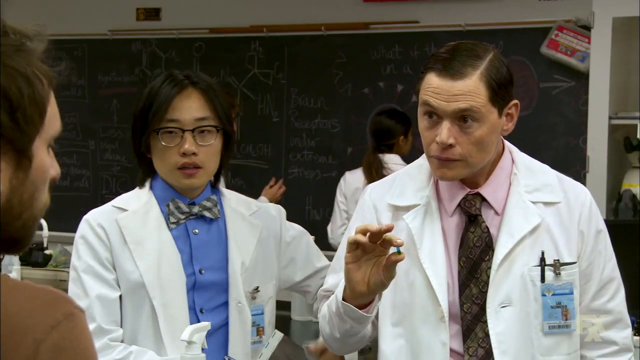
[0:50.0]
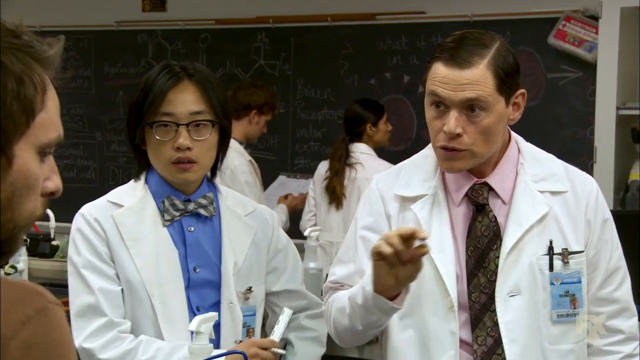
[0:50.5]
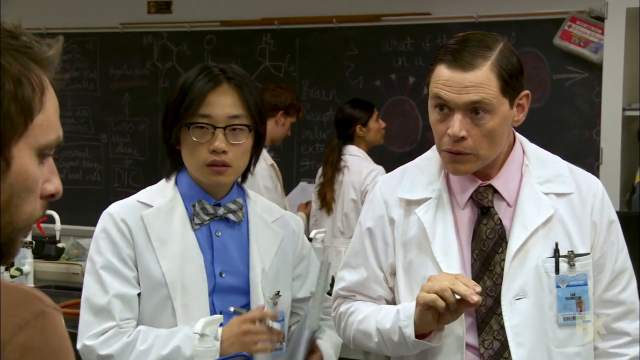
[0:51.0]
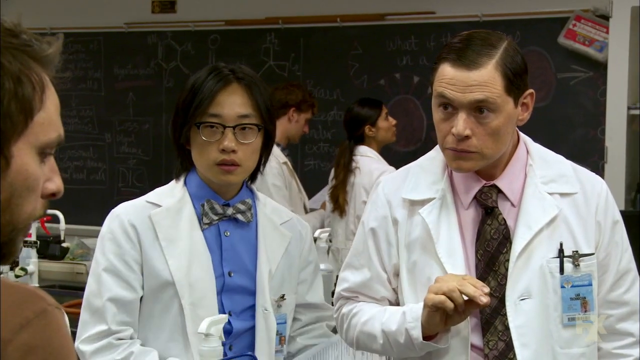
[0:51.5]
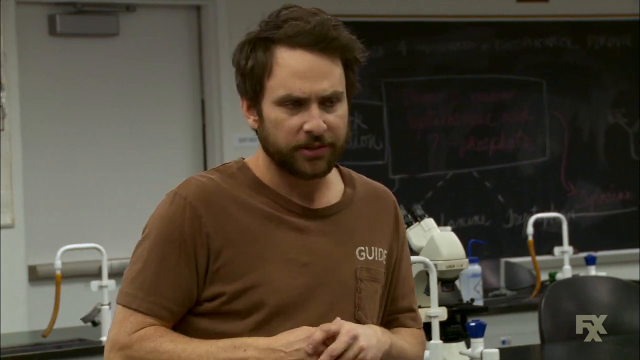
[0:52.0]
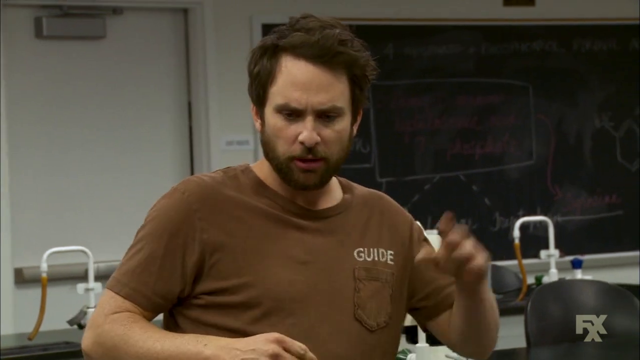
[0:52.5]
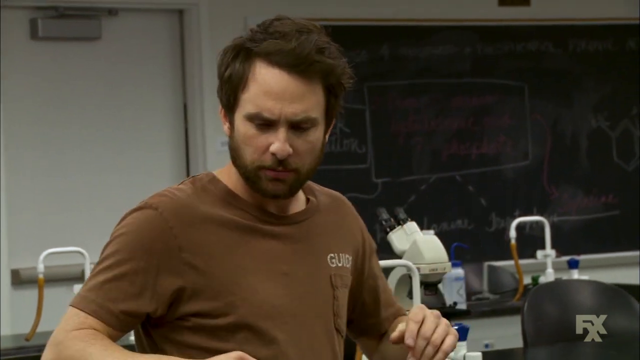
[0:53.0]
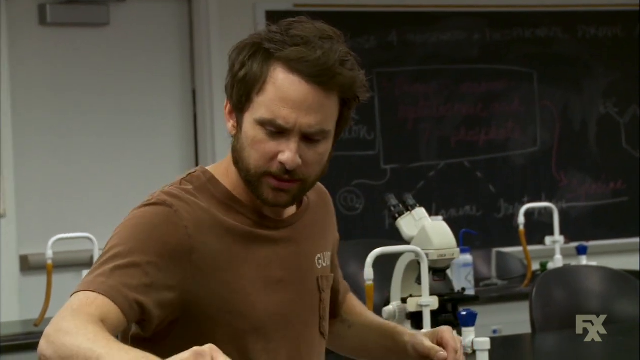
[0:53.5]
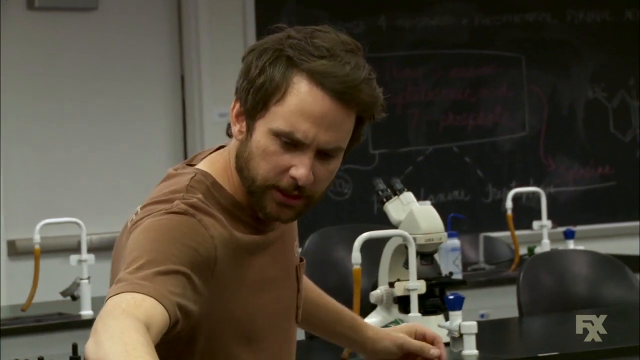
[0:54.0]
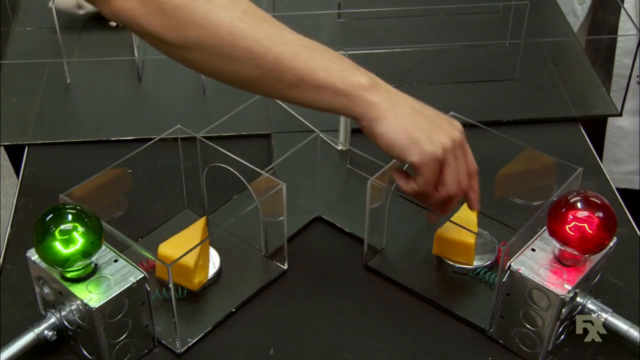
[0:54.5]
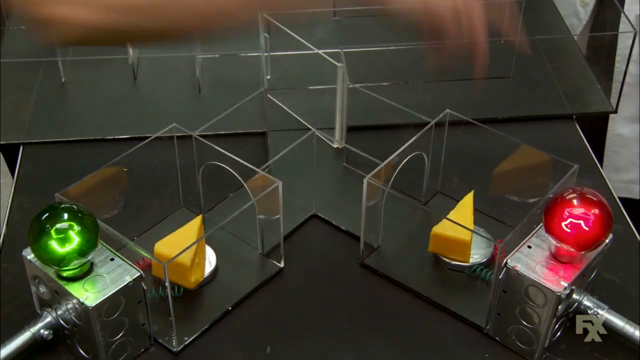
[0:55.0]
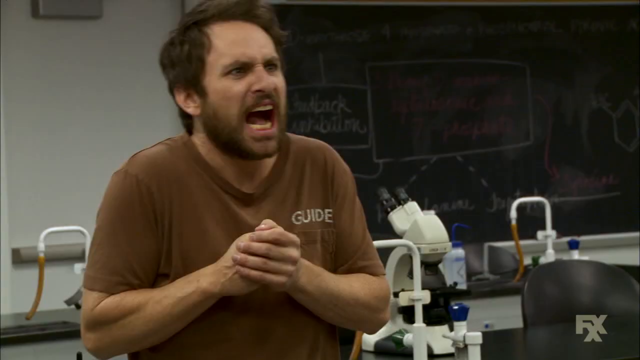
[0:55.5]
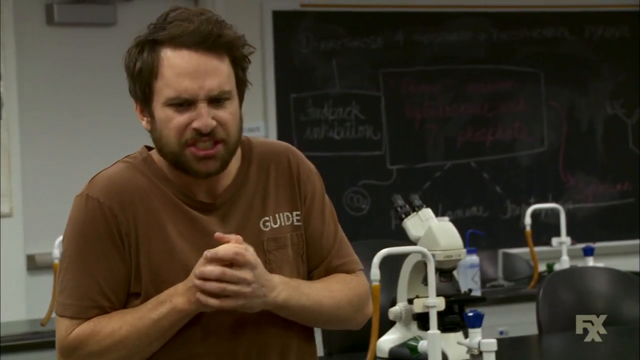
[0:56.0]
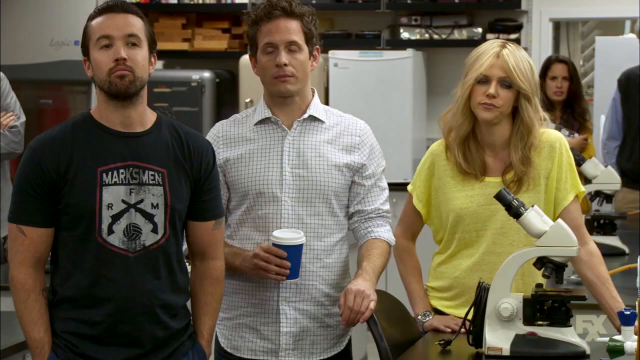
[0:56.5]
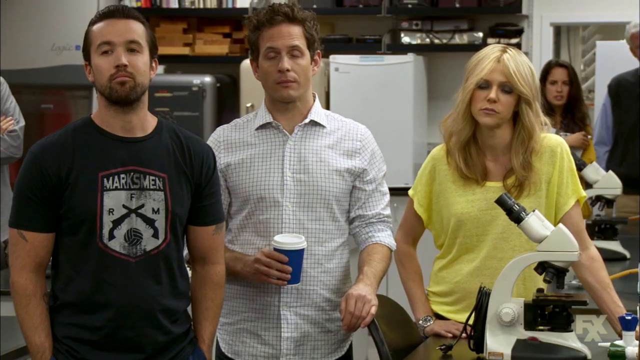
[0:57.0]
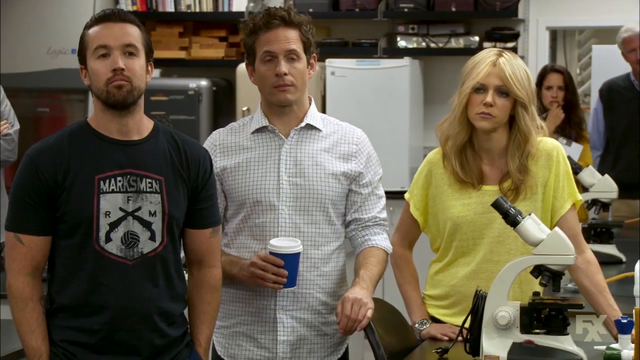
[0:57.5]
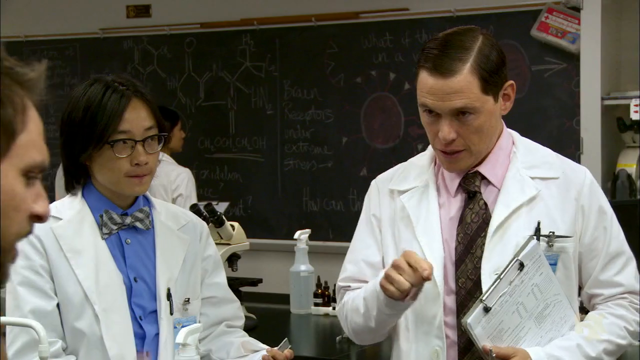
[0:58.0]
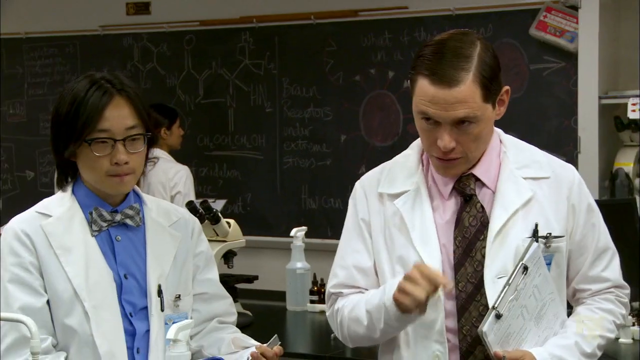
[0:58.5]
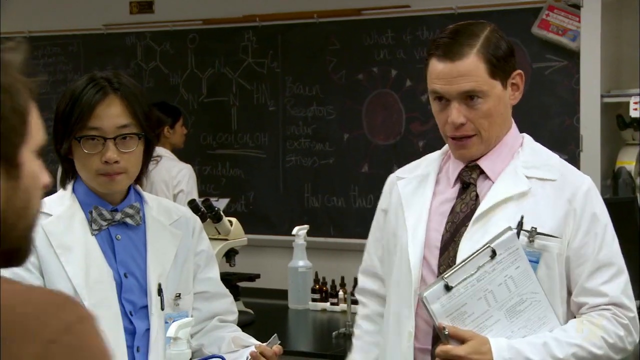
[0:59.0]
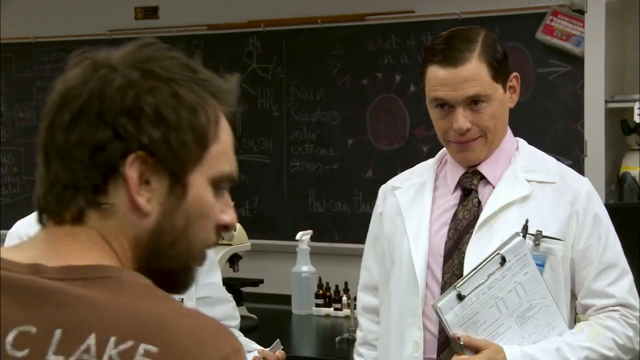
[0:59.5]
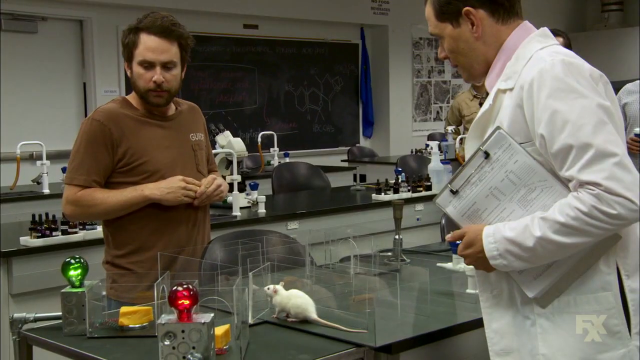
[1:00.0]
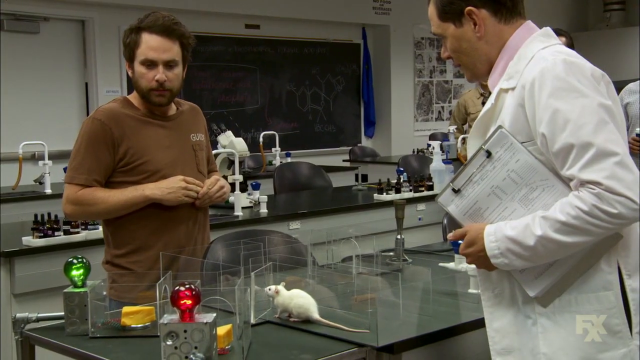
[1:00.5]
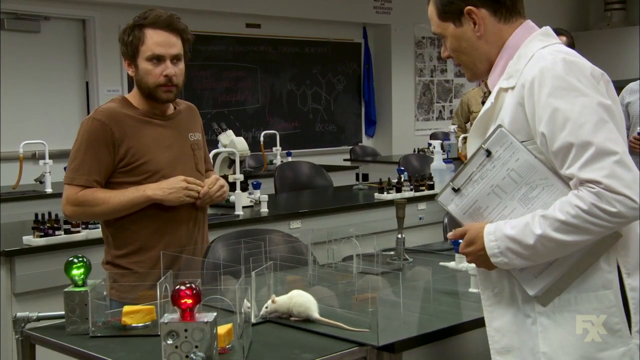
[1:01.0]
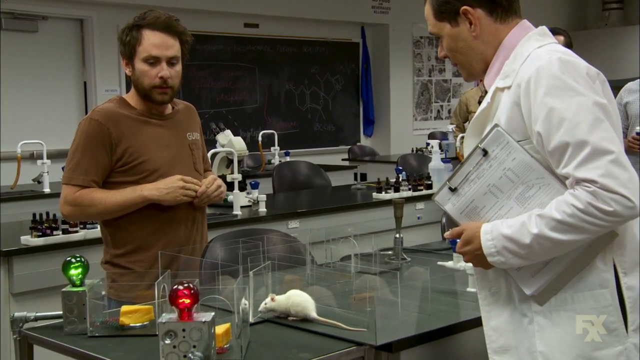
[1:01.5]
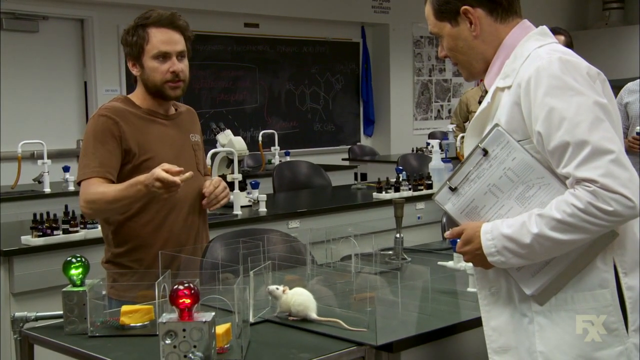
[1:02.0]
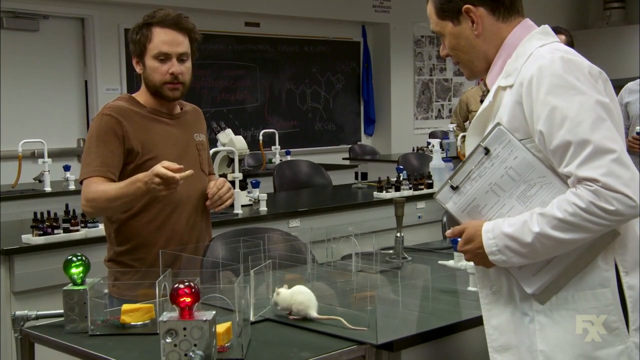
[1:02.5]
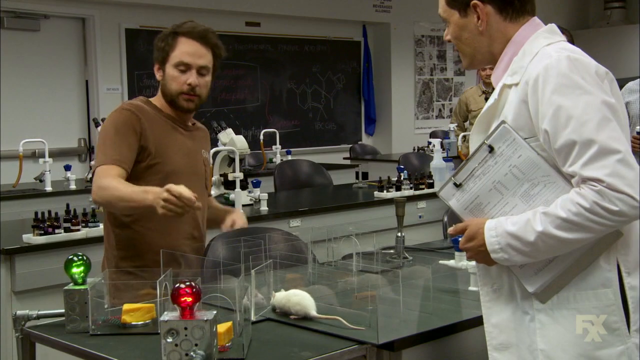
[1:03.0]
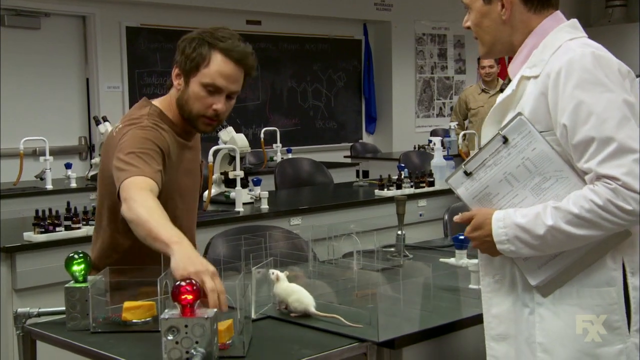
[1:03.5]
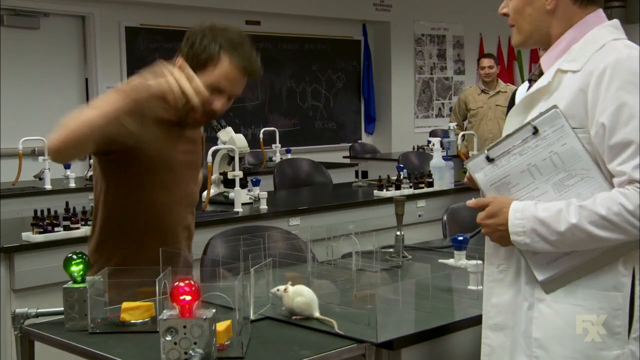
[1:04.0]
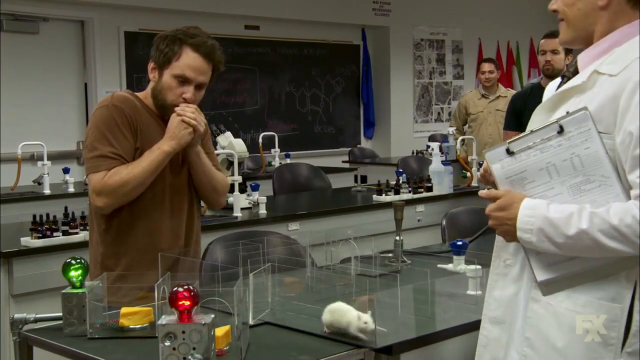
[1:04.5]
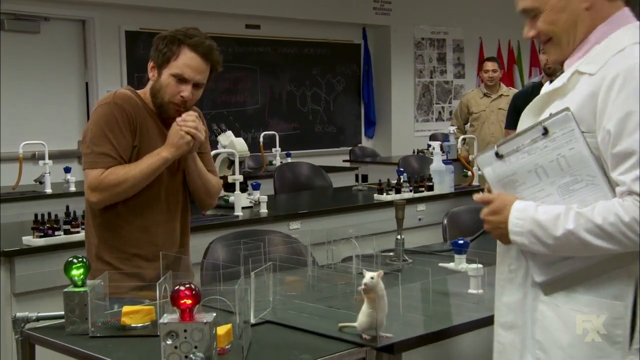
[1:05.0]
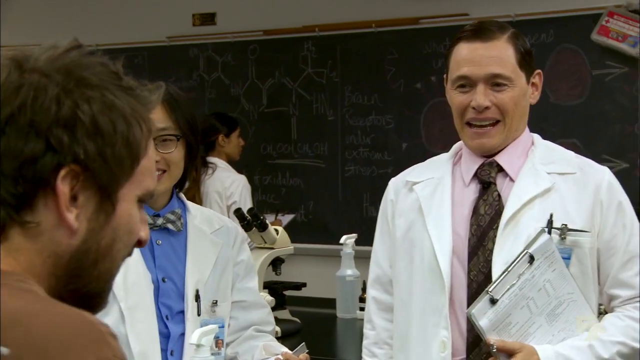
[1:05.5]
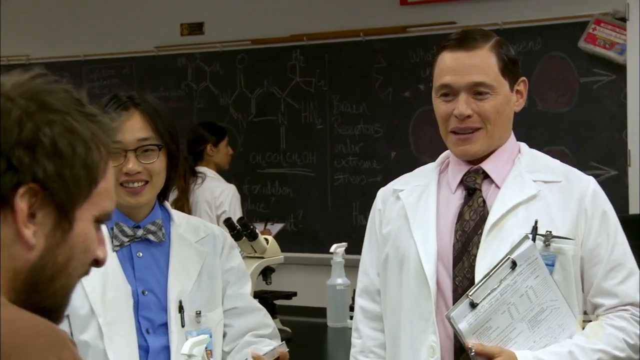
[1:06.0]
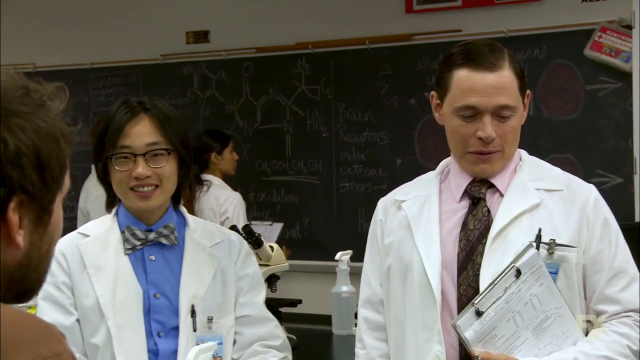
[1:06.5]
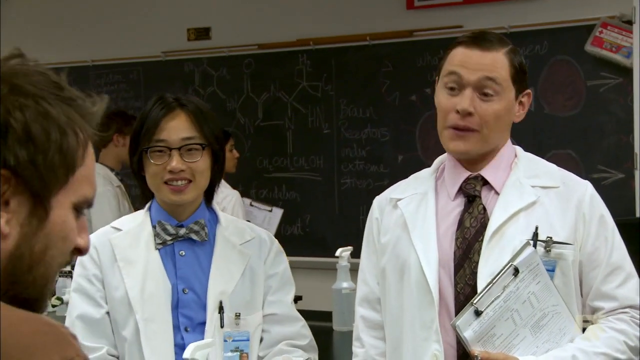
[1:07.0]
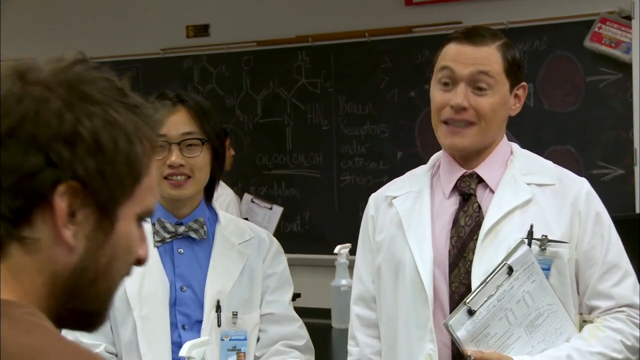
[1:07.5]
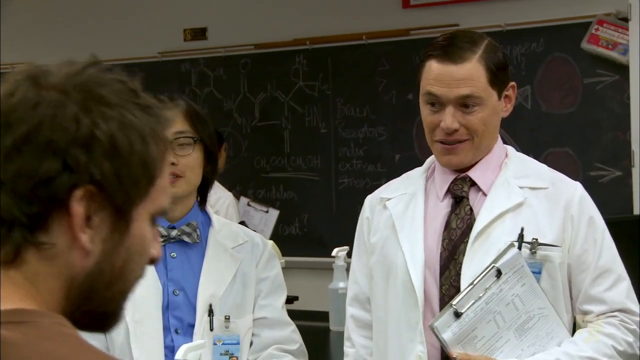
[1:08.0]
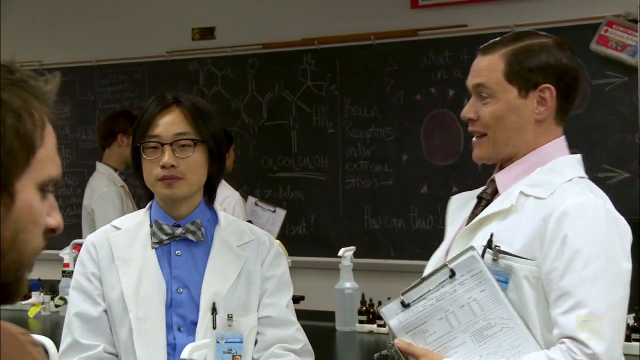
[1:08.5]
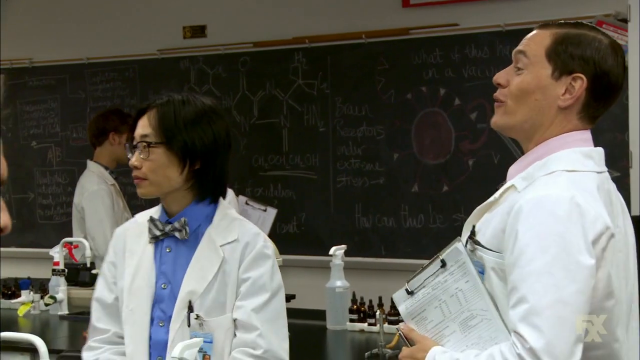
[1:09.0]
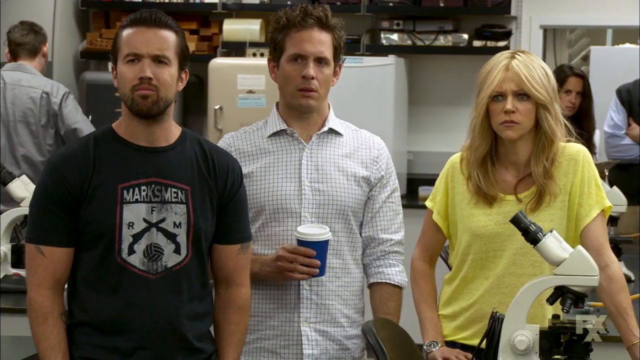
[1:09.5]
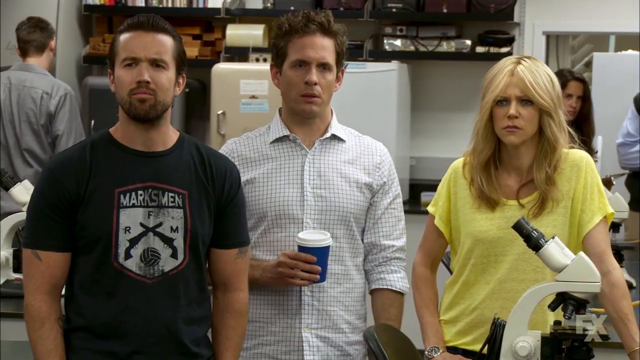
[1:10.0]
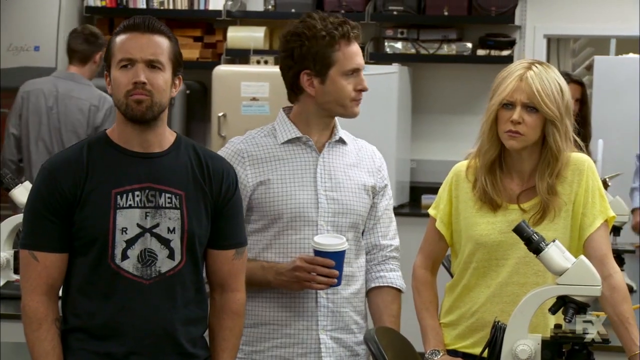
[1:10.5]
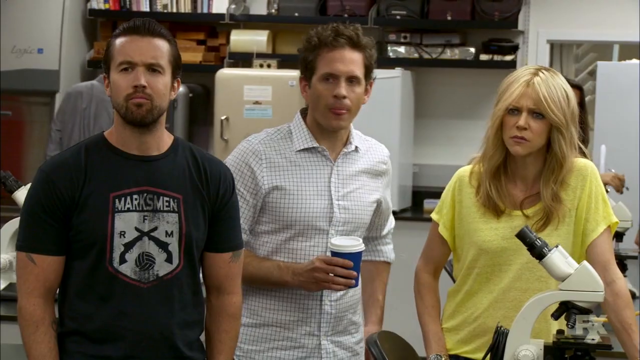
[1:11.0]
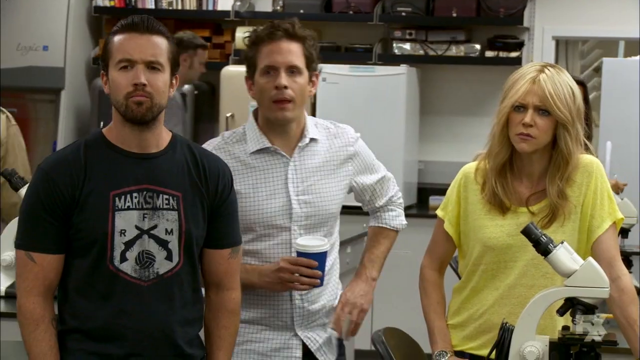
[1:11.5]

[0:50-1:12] The man in the lab coat gestures with his thumb, index finger and middle finger making an O shape, and points as he responds. The man in the brown shirt looks down at the mouse and waves with his left hand, his brows kind of furrowed. His right hand reaches in for a wedge of cheese in one of the plastic containers, then he pulls back and yelps, holding his right hand with his left and rubbing them together. The shot cuts to three people staring at him with deadpan looks, the one in the middle shaking his head. The shot cuts to the man in the lab coat, who points at him again, challenging him. The man in the brown shirt looks again, hesitant, and points to the red light: one piece of cheese has a red light and another has a green light bulb. He reaches forward and grabs the cheese with his right hand, then pulls back again, holds his hand up against his mouth, covers it with his left hand and blows on it to cool it down. Both men in lab coats laugh. The one standing on the right replies, looks down, looks back at the man, and sort of raises and drops his brows, almost like a smirk. As he continues, he looks over to the people across the room: two men and a woman in a yellow shirt look on, their brows furrowed, seemingly in curiosity or unsure what is going on. The one in the middle, carrying a coffee mug, shifts and shakes his head, his left hand on his head, looking uncomfortable.